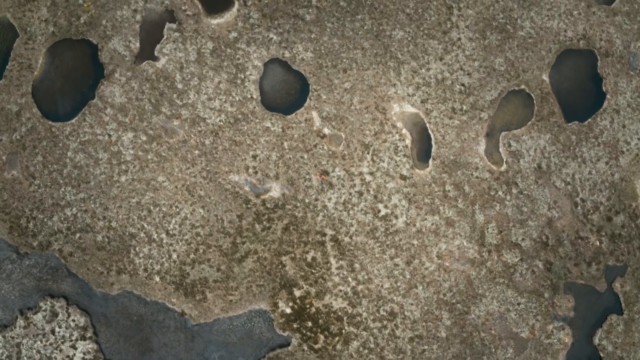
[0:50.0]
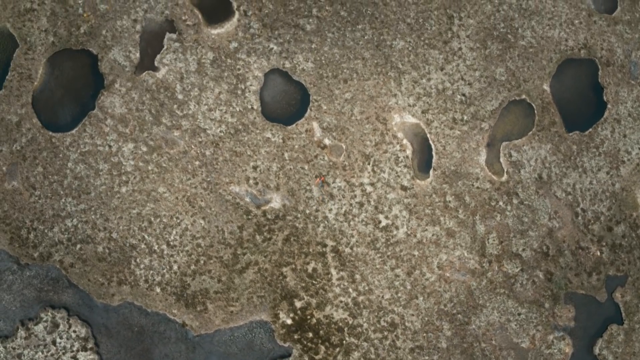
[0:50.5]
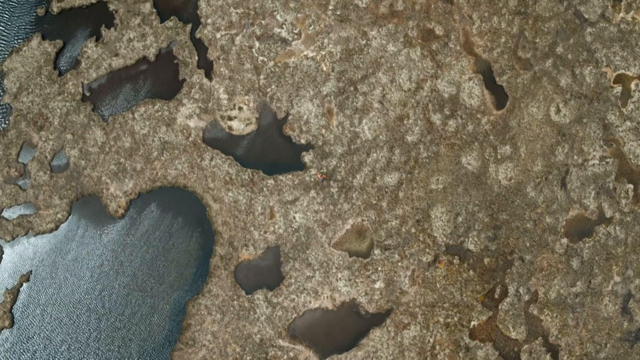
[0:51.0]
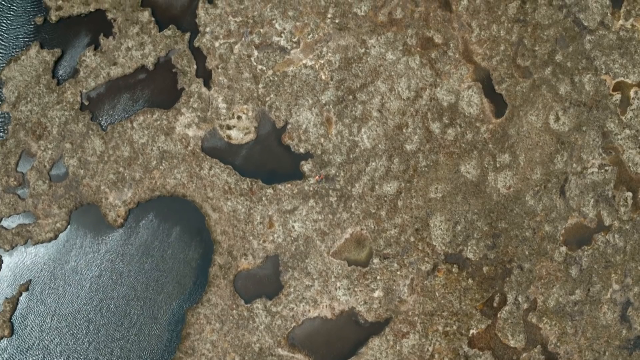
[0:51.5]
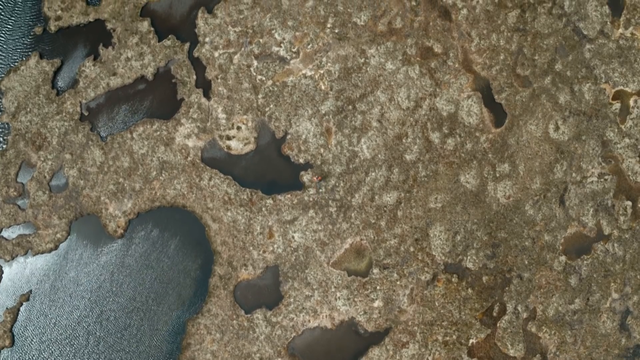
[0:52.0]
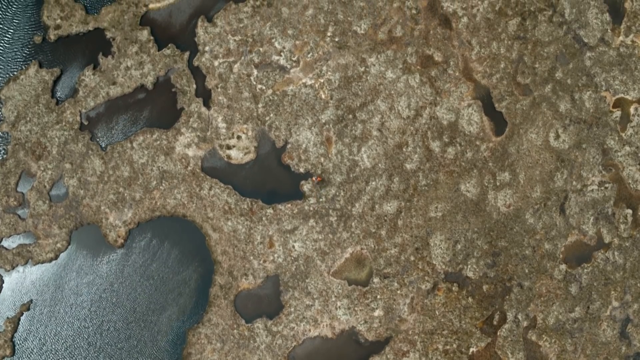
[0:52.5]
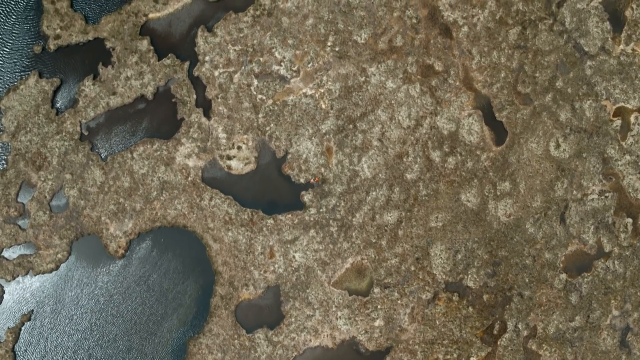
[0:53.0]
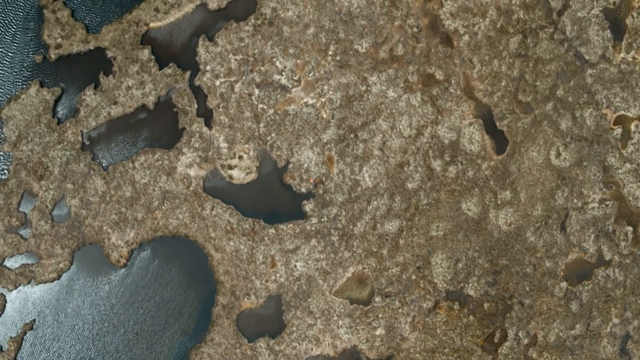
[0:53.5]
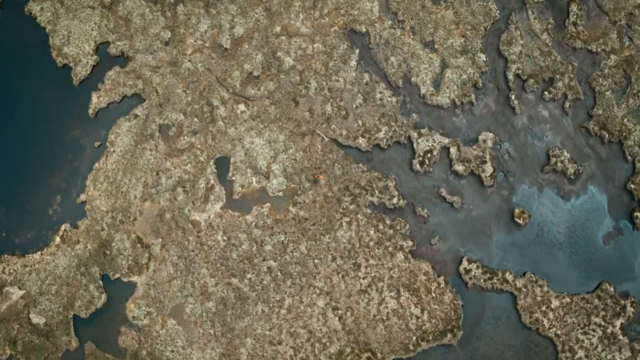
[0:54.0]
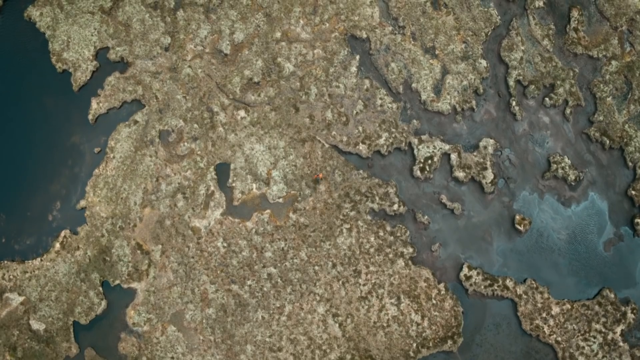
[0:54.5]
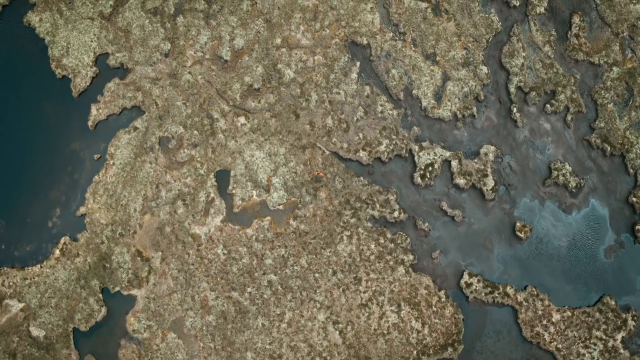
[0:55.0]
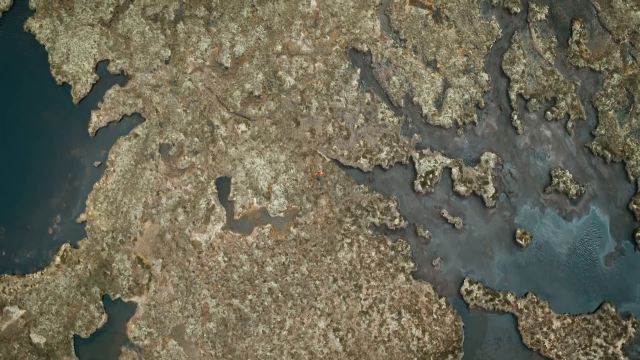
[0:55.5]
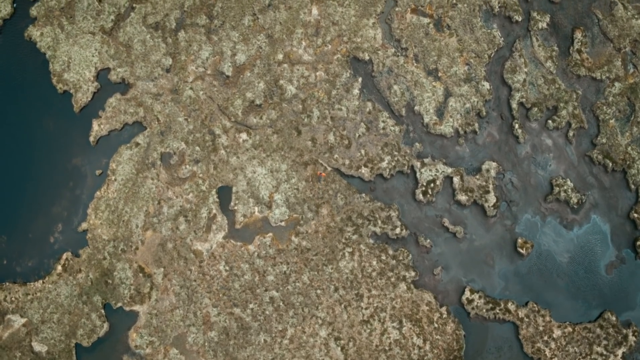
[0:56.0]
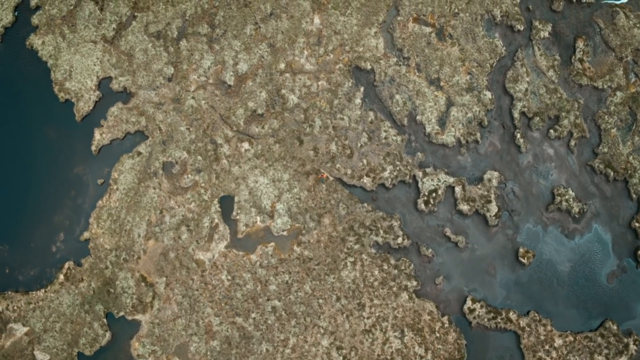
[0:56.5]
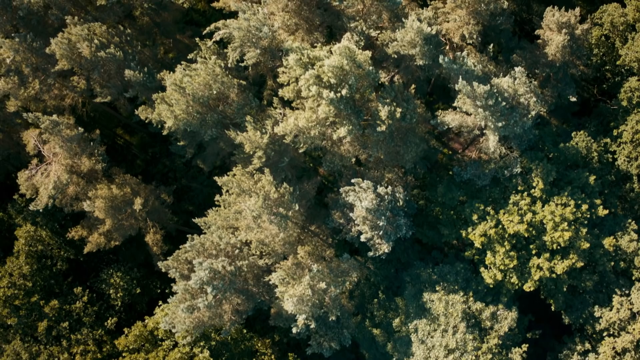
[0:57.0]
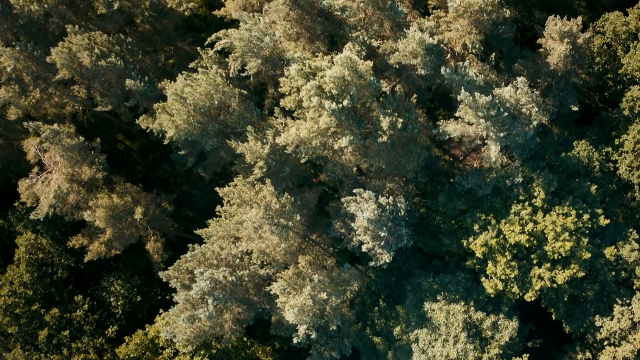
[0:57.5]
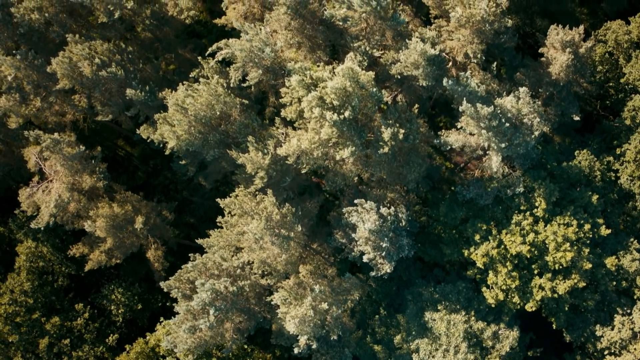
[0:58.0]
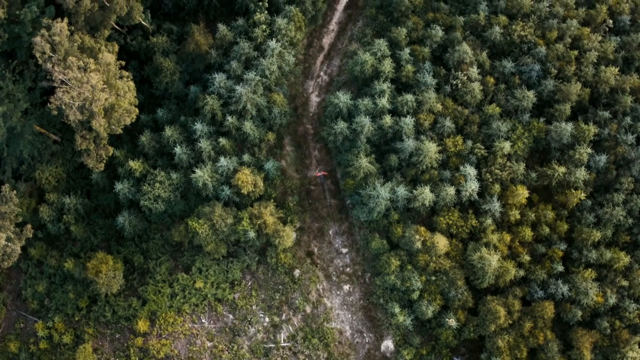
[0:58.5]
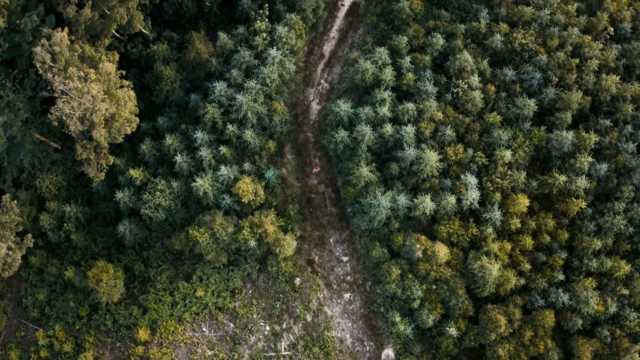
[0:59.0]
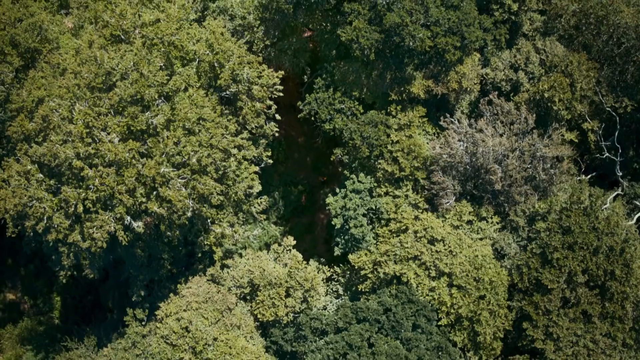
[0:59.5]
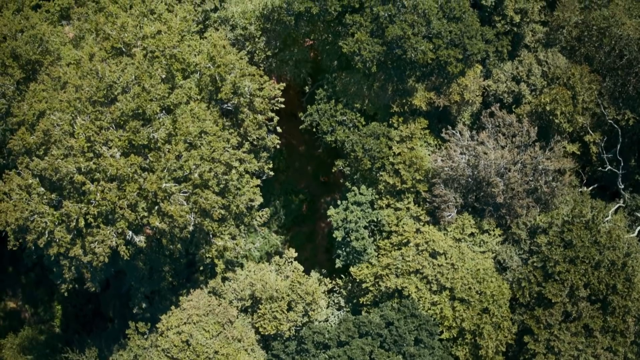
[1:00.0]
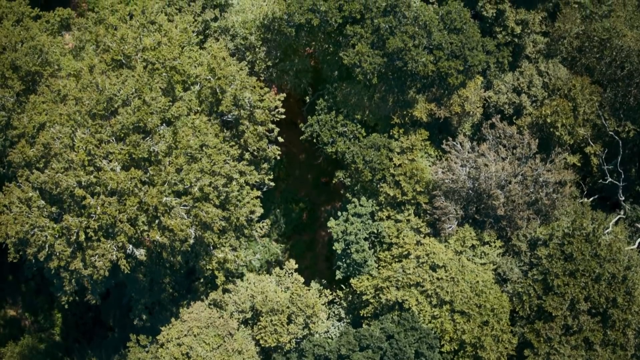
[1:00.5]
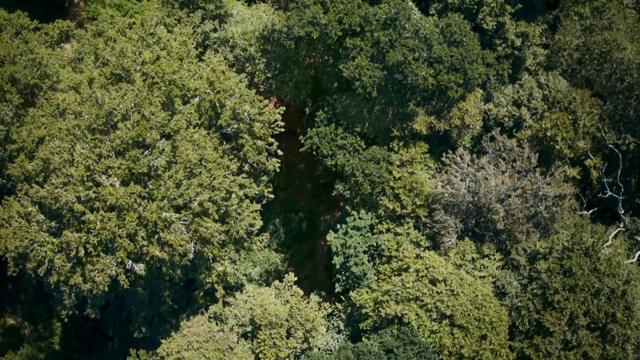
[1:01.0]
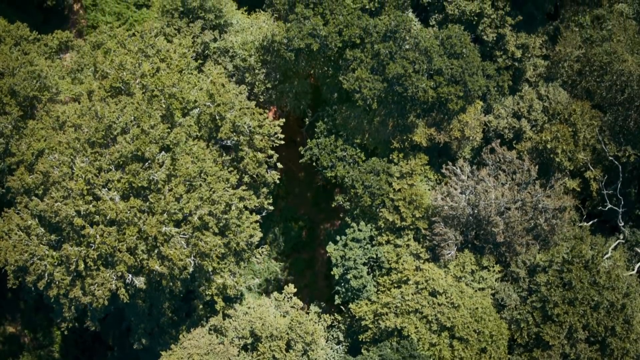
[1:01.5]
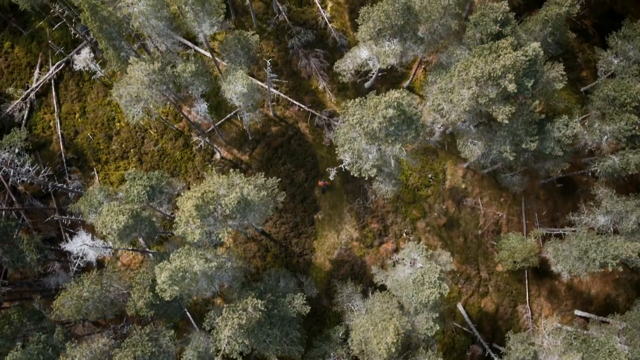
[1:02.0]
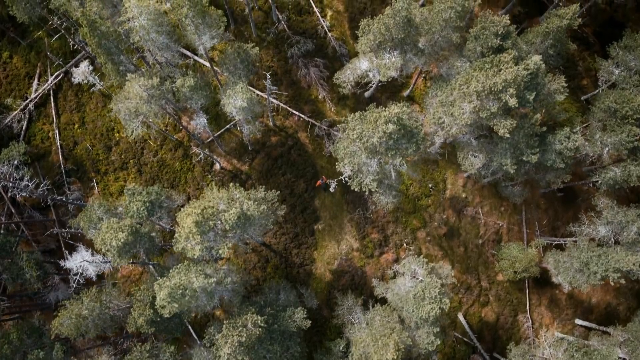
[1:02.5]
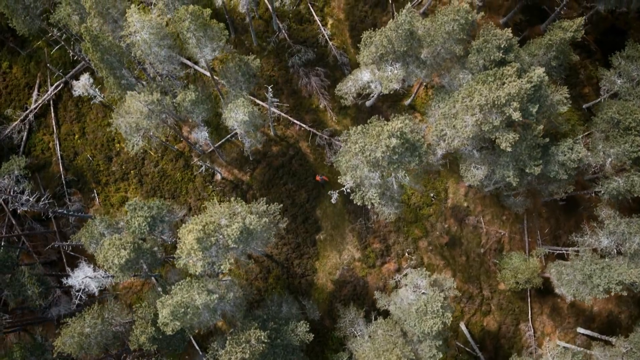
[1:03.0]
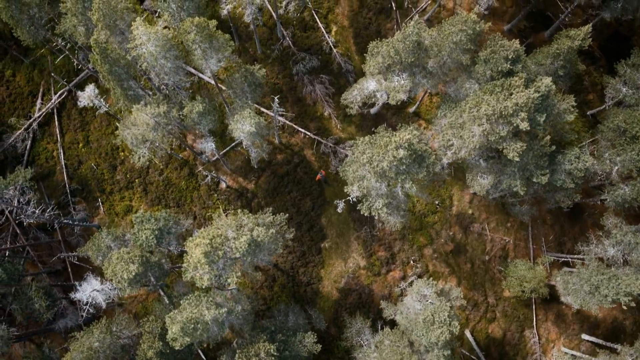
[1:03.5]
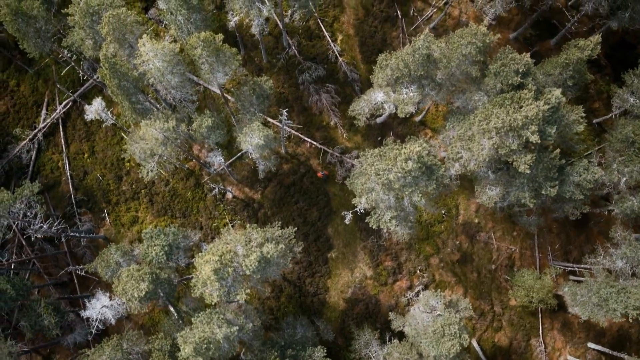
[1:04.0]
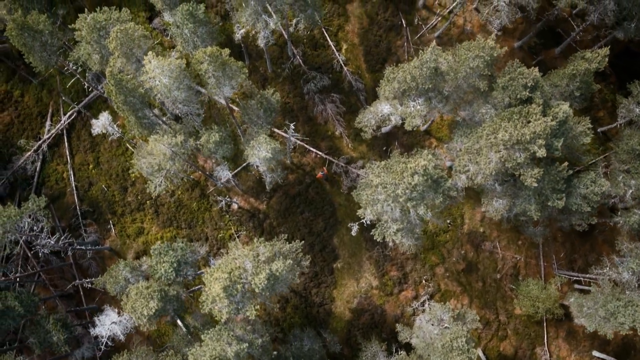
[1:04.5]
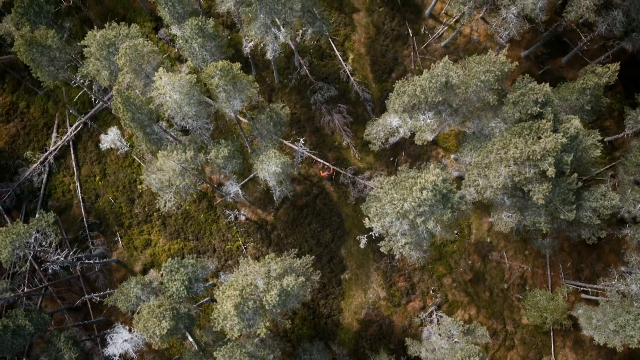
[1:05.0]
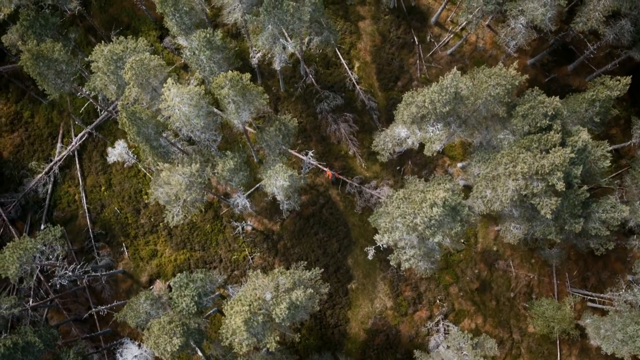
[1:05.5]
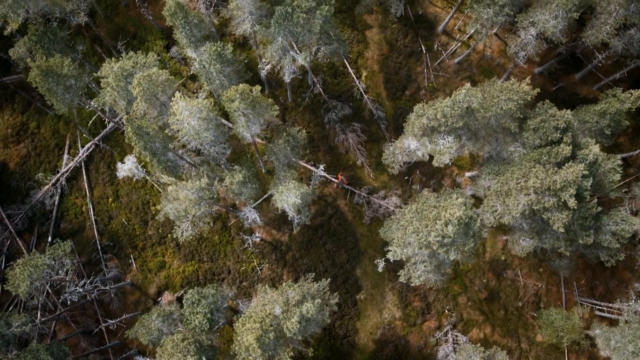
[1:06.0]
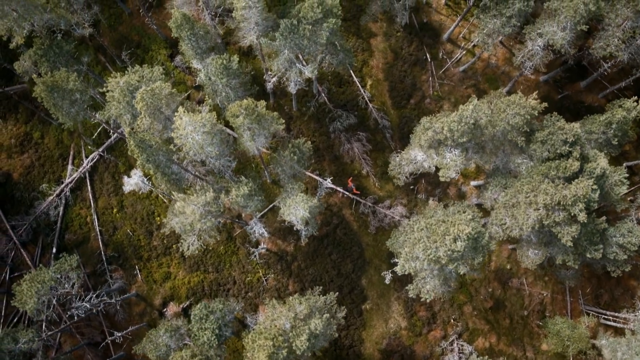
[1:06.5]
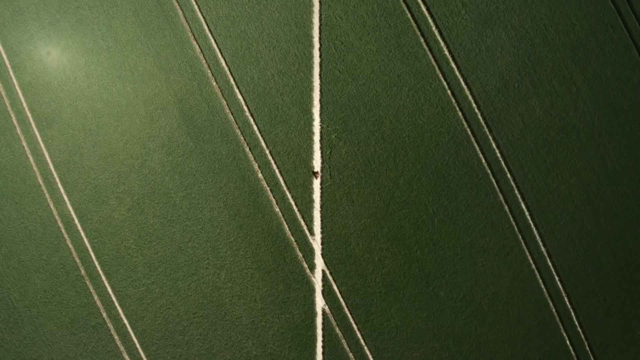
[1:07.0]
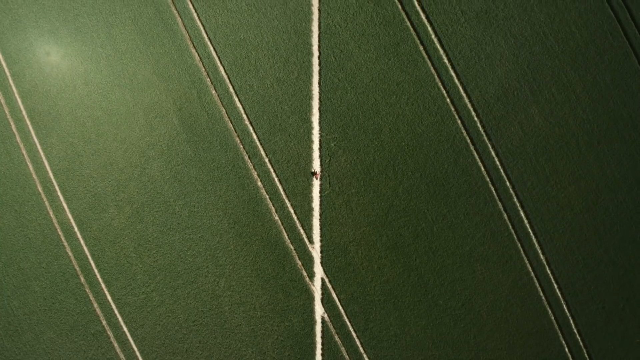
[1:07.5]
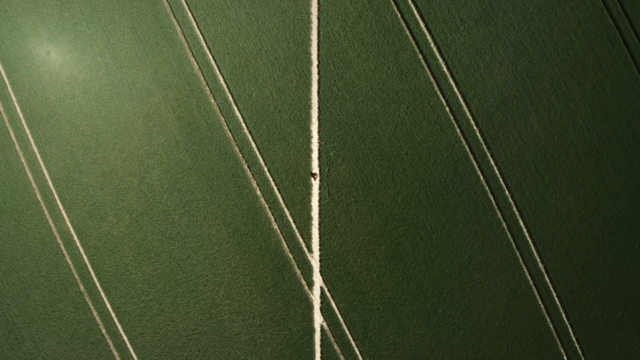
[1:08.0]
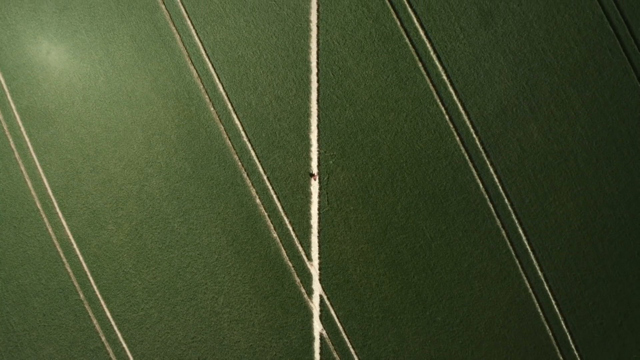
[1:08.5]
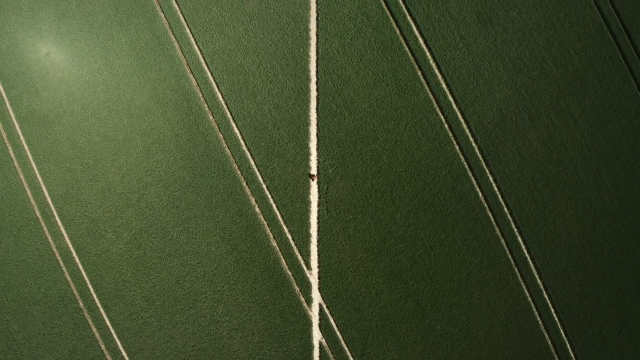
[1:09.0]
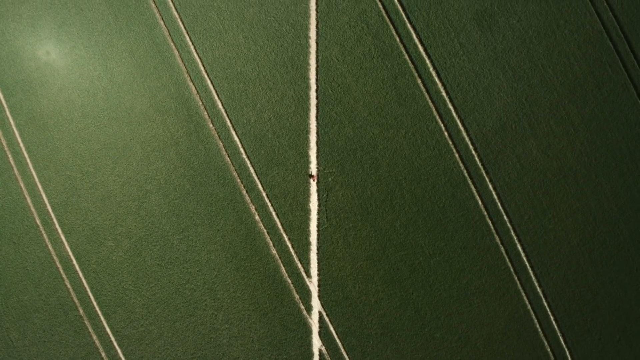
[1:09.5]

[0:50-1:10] The camera looks down from above, as if from a drone or some other flying vehicle. A person, too far below for their gender to be made out, appears to be running as in a sport, maybe a marathon. The scene switches constantly. On a flat, straight brown road, the person is surrounded by many green trees; then the view switches to a different grove of trees that are more white than green, with the person running through it. Next come large green fields that look like they may be crops, with white lines going across, and the person runs along one of the white lines. It switches again to a rocky landscape, all beige and black, where the person appears to be running over the rocks, which have little ponds of water around them.